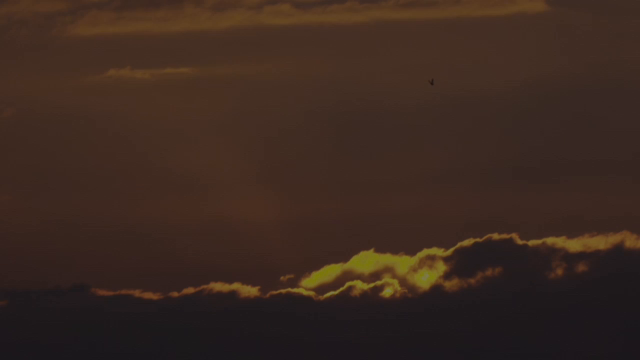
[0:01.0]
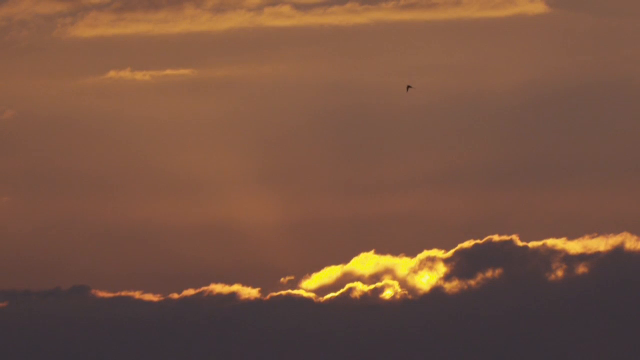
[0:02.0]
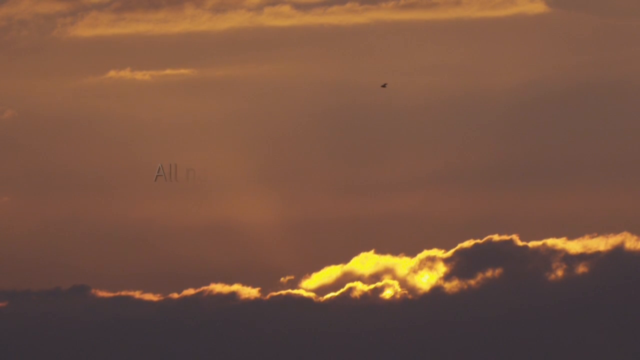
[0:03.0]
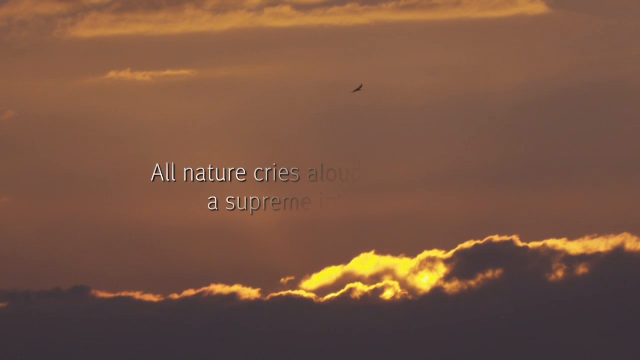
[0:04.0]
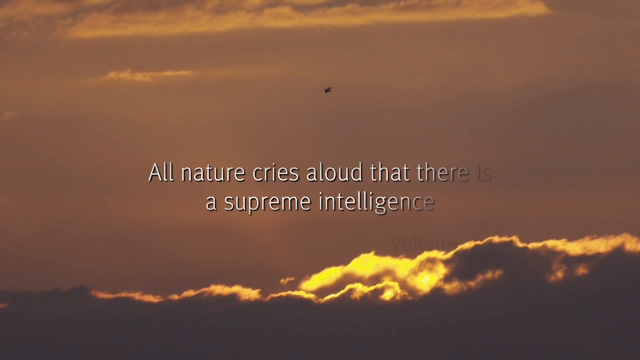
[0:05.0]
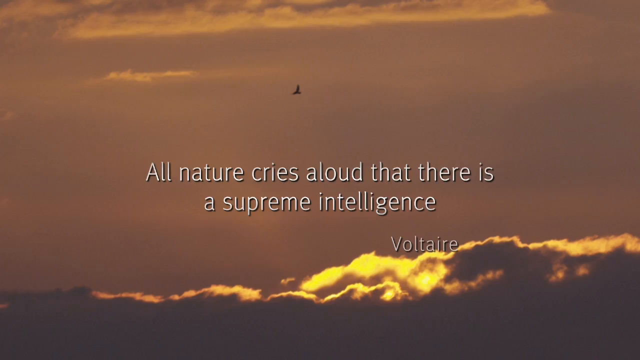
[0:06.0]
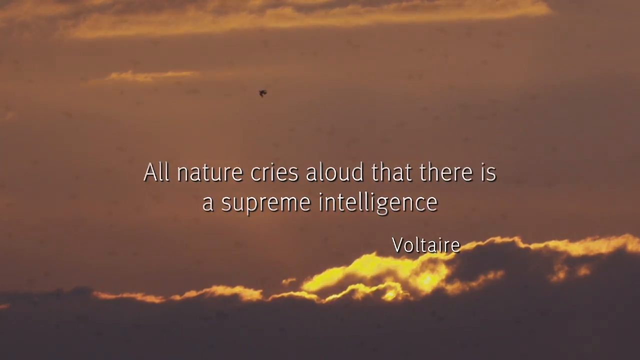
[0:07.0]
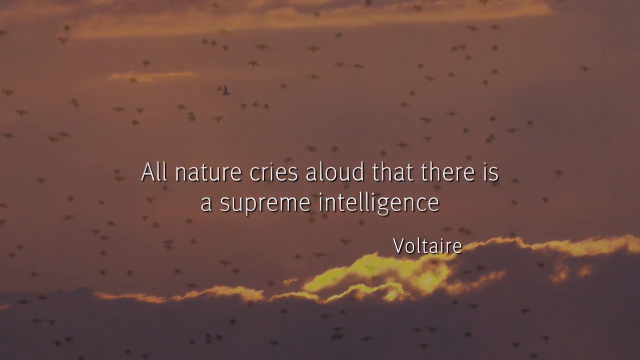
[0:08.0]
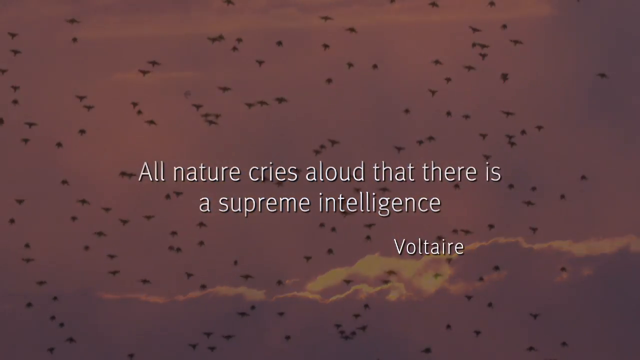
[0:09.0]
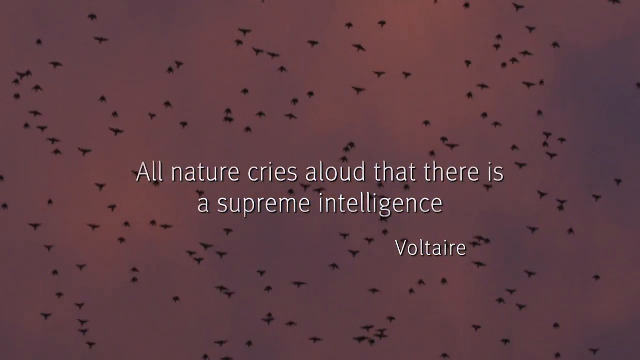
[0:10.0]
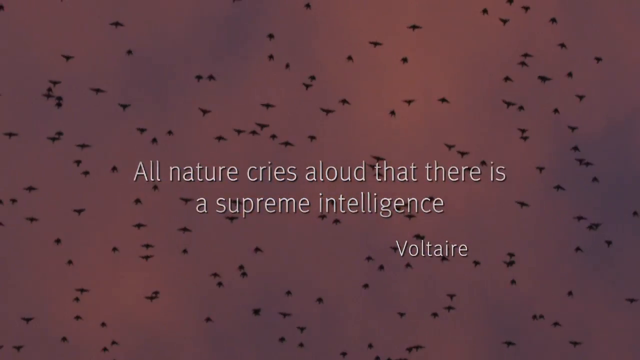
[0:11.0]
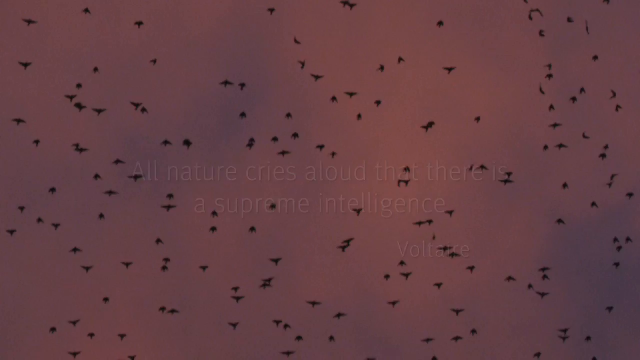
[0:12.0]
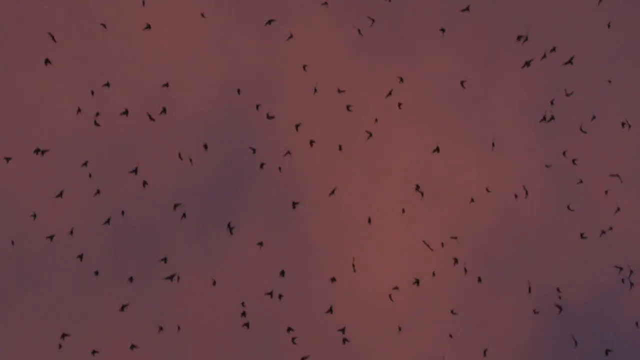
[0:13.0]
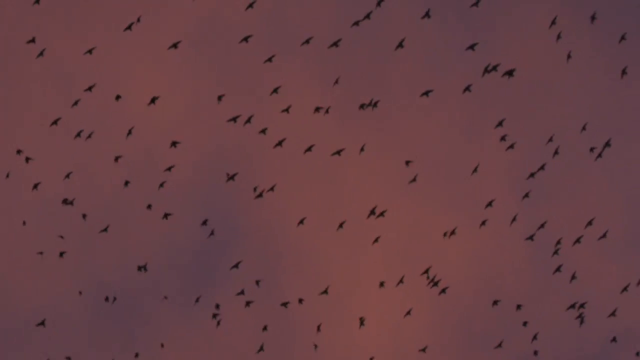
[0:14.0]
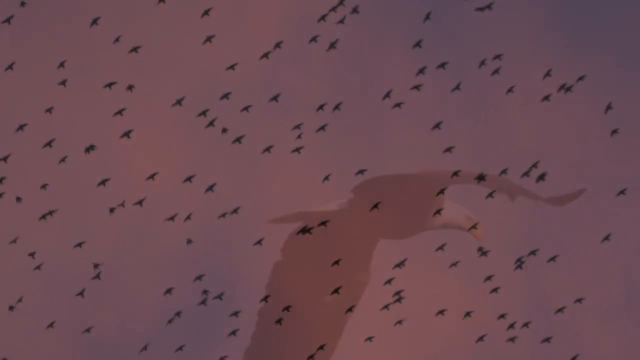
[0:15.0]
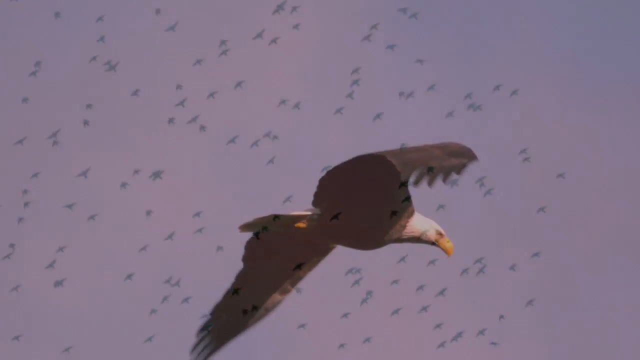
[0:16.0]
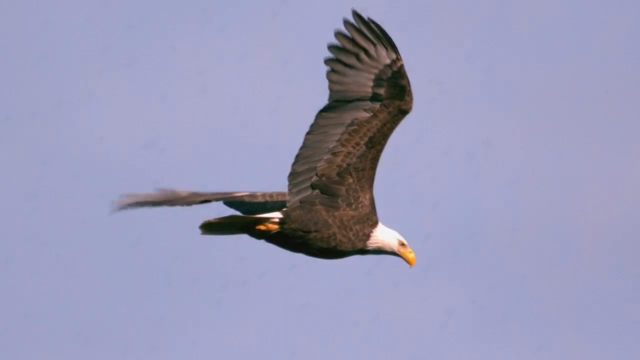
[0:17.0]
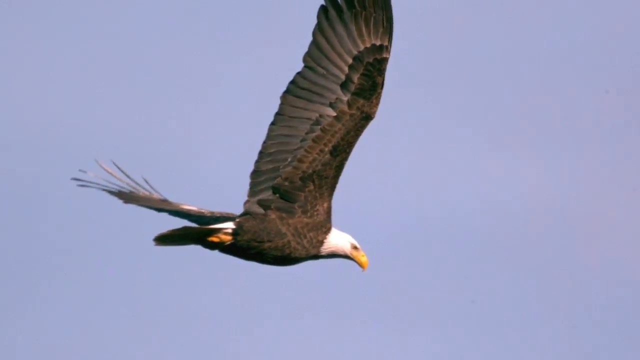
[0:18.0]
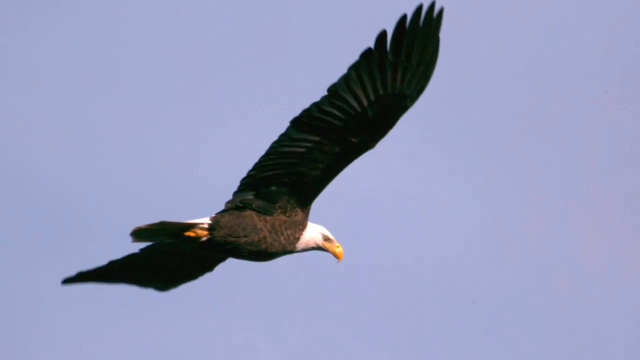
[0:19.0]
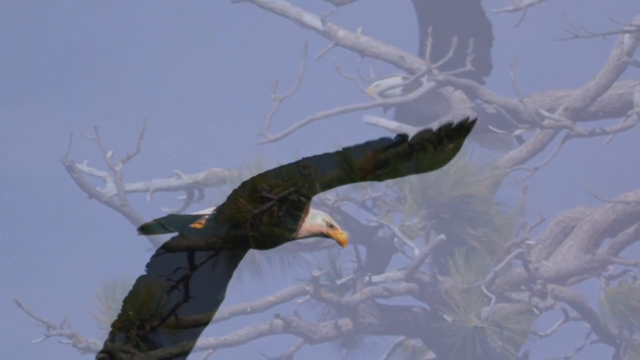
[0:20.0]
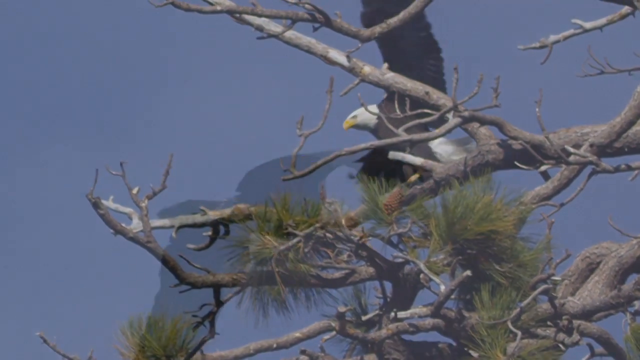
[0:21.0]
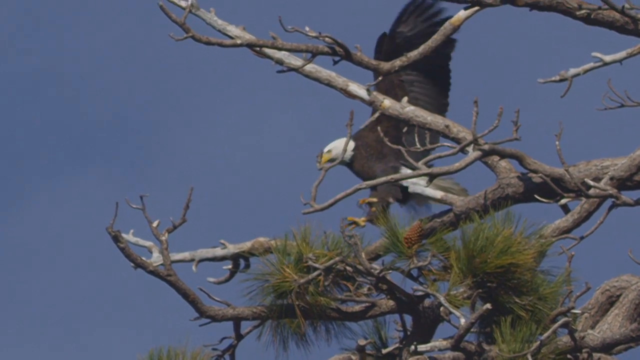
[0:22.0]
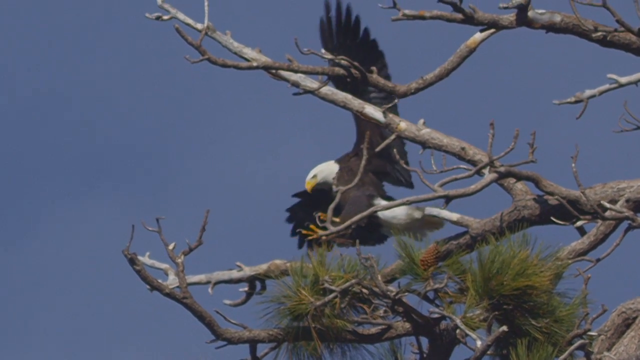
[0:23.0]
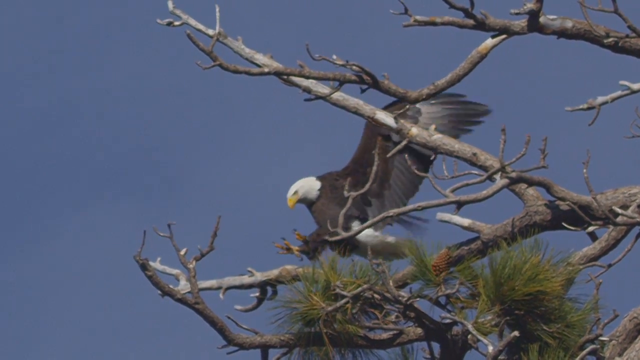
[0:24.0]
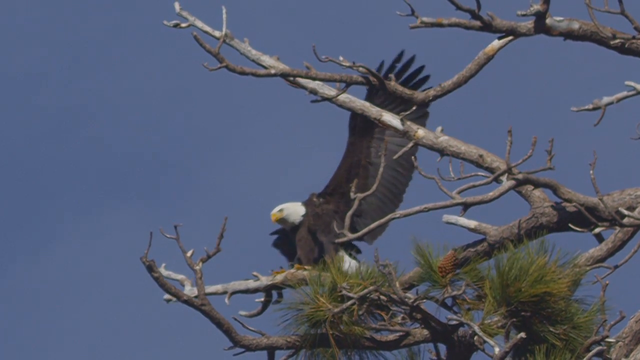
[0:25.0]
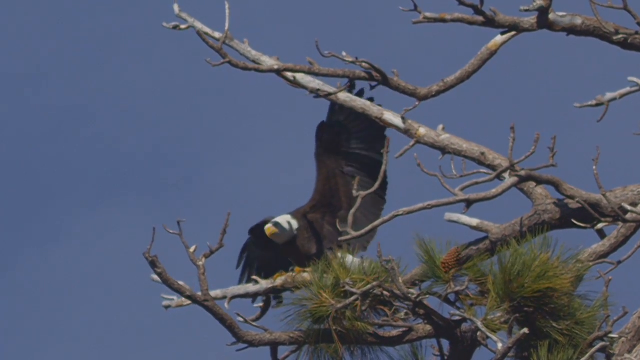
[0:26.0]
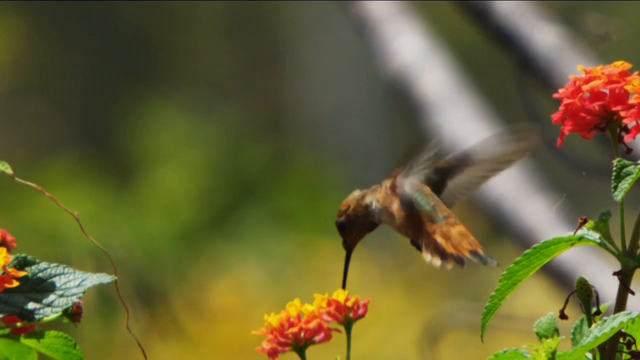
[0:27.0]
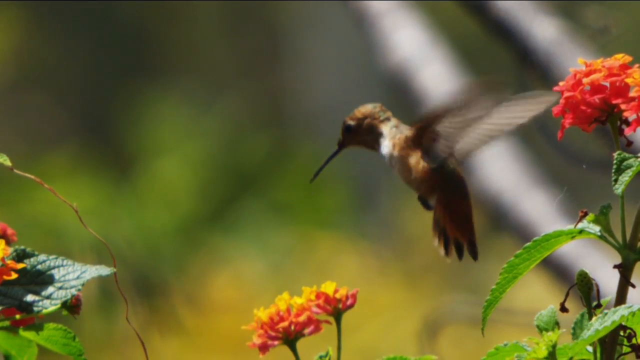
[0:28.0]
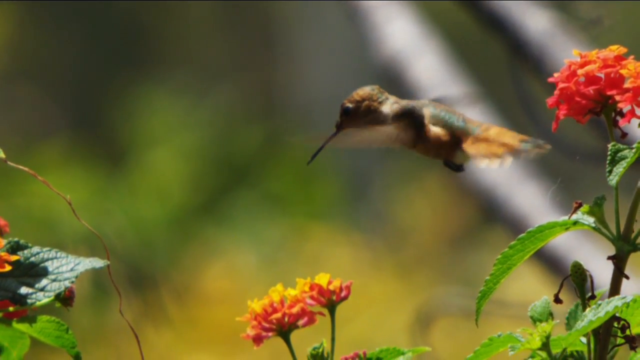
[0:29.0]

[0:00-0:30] The video opens on a picture of the sky, with the sun behind the clouds making them glow. The front of the clouds is dark and the background is pinkish-rose colored, with some white clouds at the top. Text comes across the screen reading "All nature cries aloud that there is a supreme intelligence," a quote from Voltaire. Hundreds of birds fly across the sky. Next, a bald eagle flies against a blue sky, flapping its wings, and lands in a tree. A small hummingbird then sips nectar from red and yellow flowers. On the left side is something unidentified, possibly the sprout of a plant or a branch with a leaf on it. On the far left, to the left of that little branch, is a dark green leaf whose tip is glistening white; it also has some of the red and yellow blossoms on it. On the right side of the picture is the same type of flower with green leaves on a stem, along with what looks like buds getting ready to open.